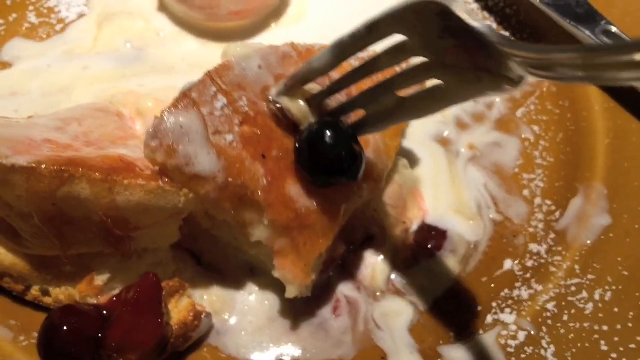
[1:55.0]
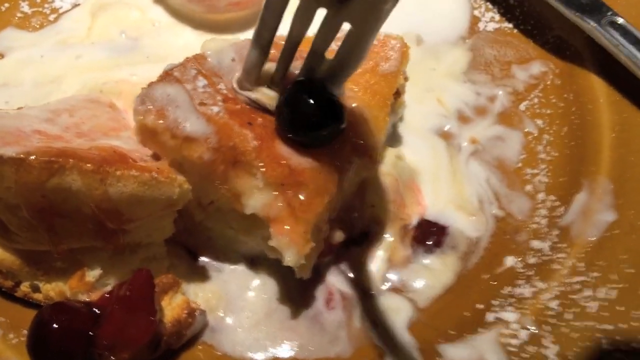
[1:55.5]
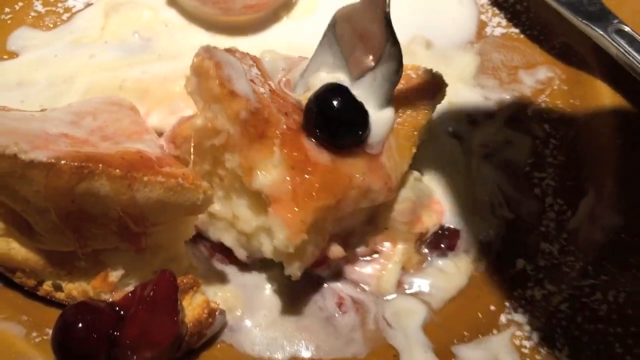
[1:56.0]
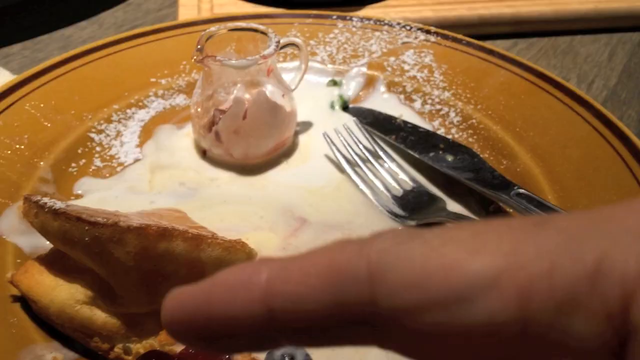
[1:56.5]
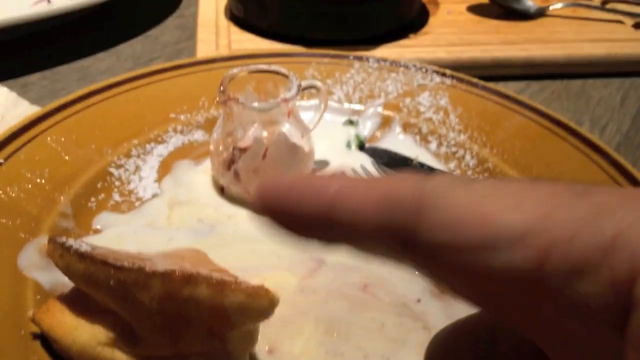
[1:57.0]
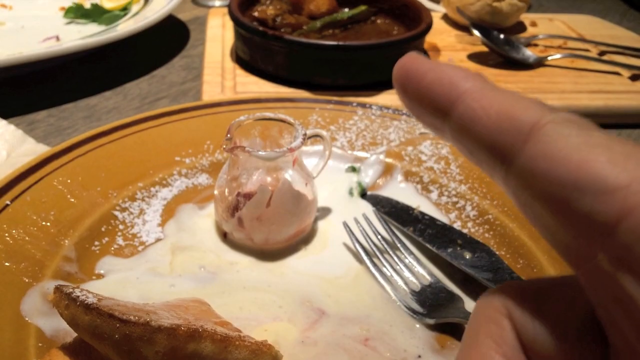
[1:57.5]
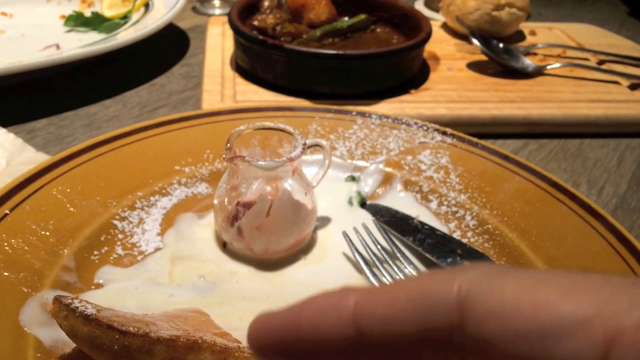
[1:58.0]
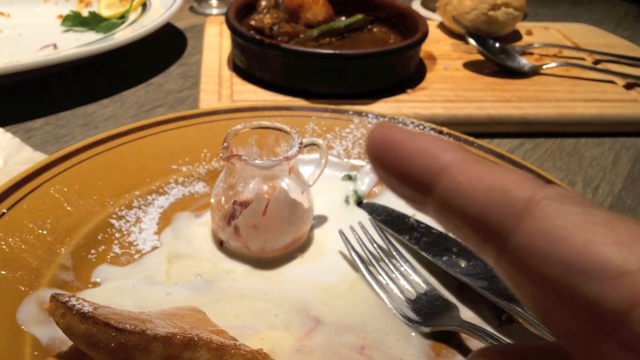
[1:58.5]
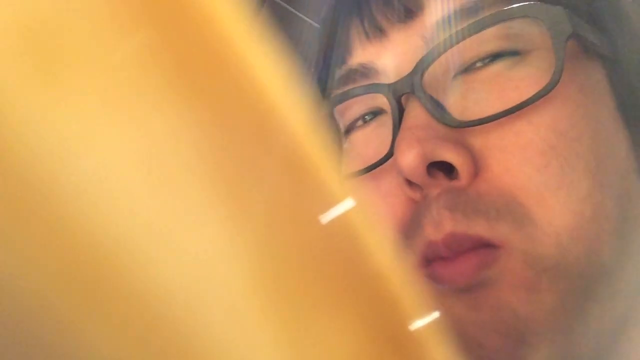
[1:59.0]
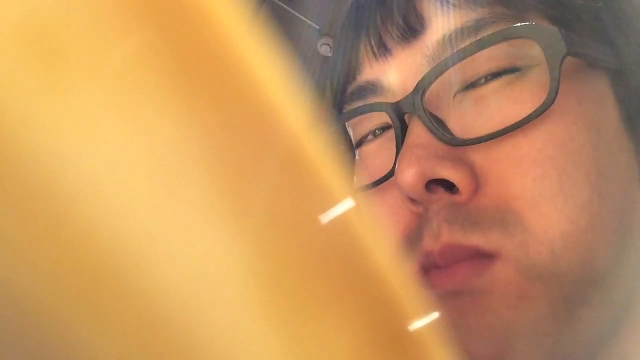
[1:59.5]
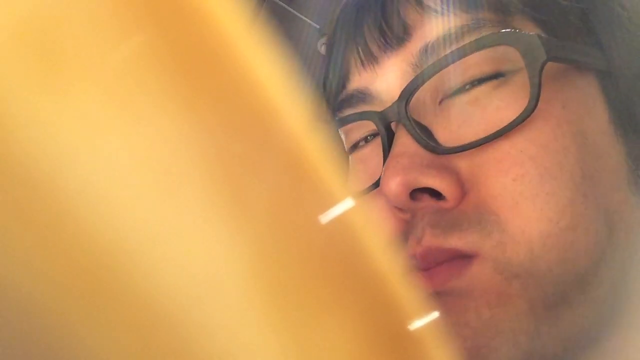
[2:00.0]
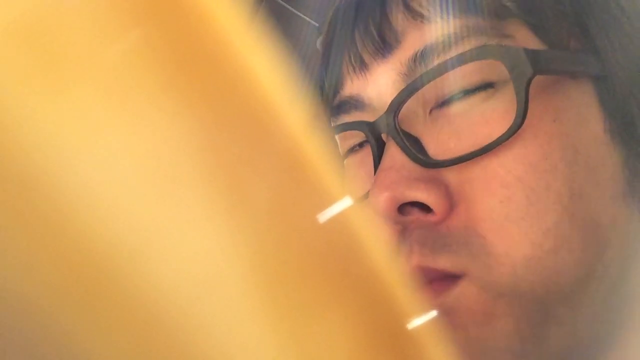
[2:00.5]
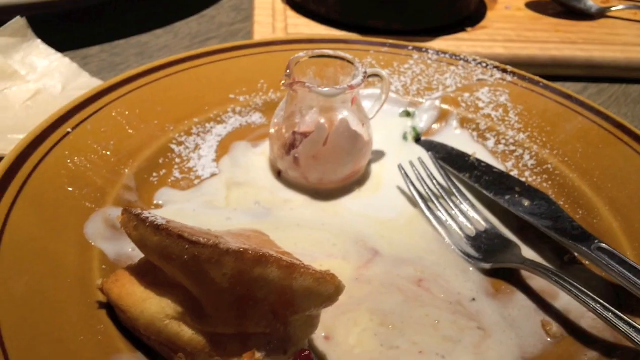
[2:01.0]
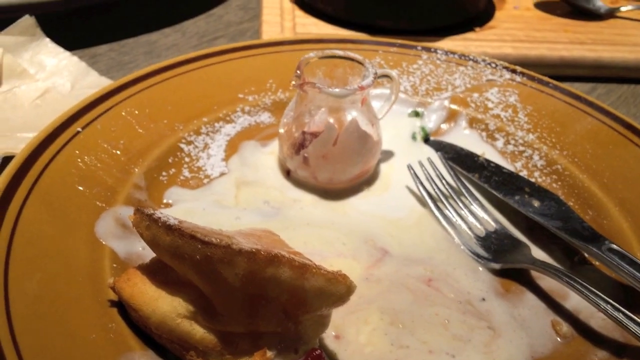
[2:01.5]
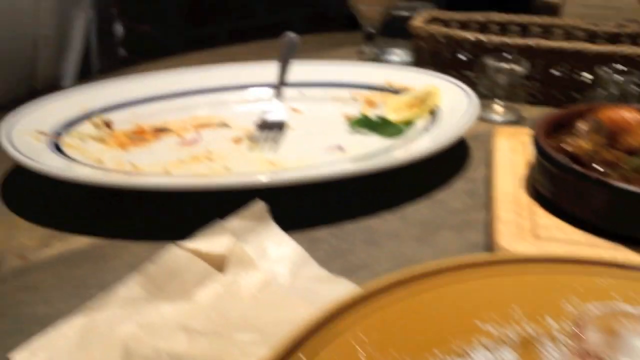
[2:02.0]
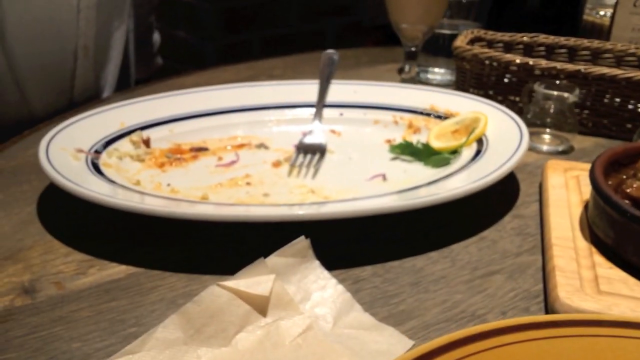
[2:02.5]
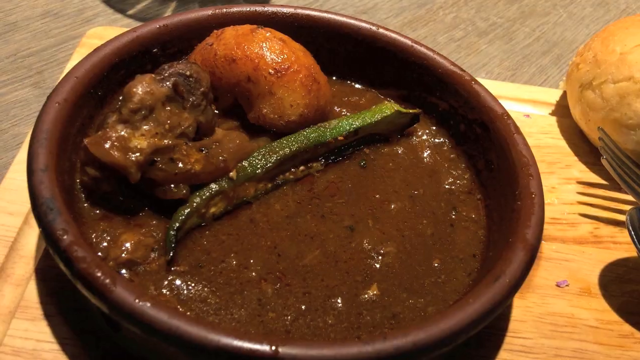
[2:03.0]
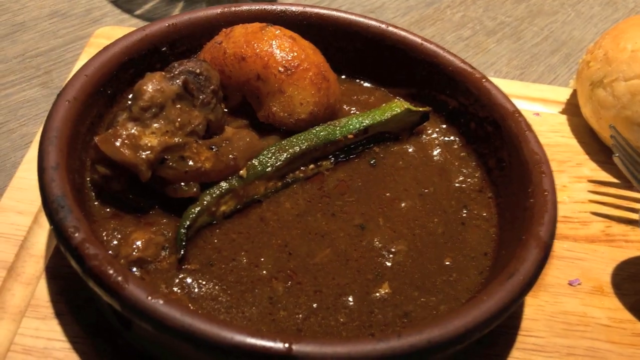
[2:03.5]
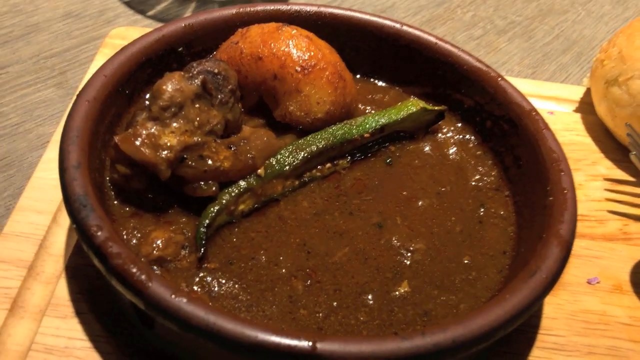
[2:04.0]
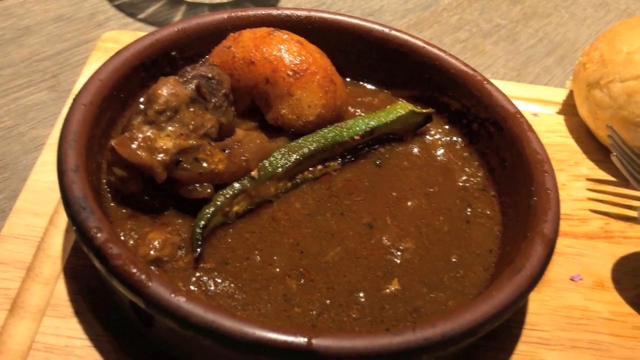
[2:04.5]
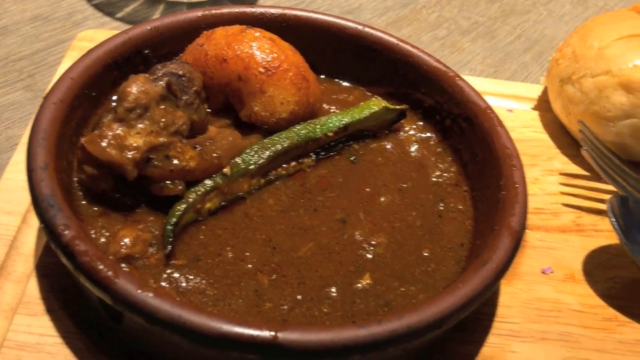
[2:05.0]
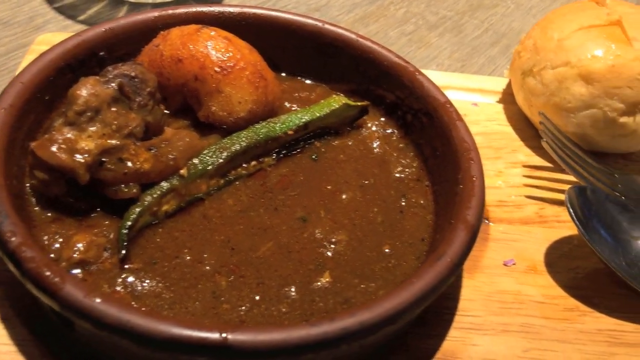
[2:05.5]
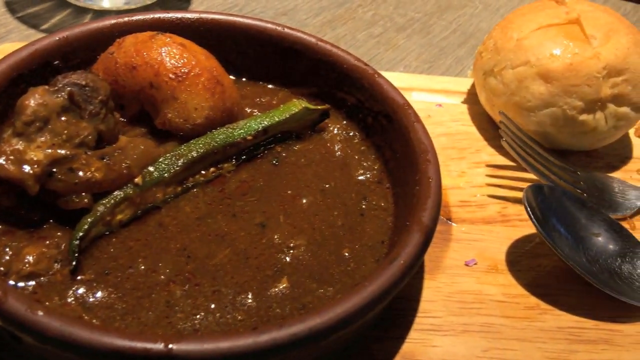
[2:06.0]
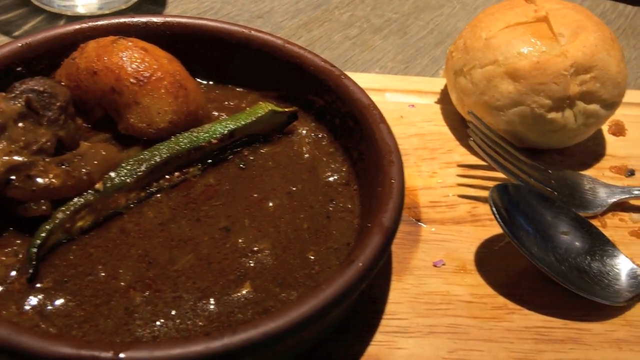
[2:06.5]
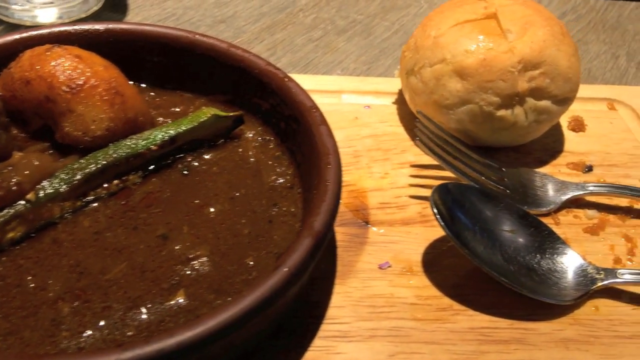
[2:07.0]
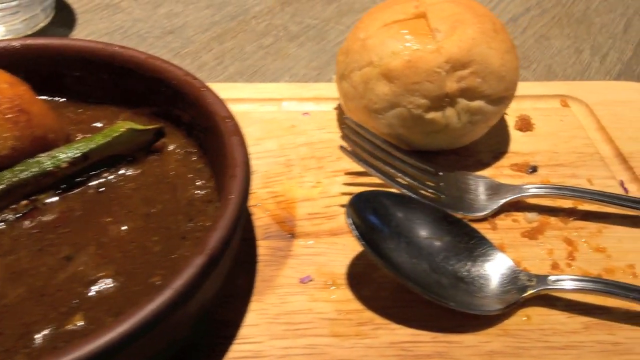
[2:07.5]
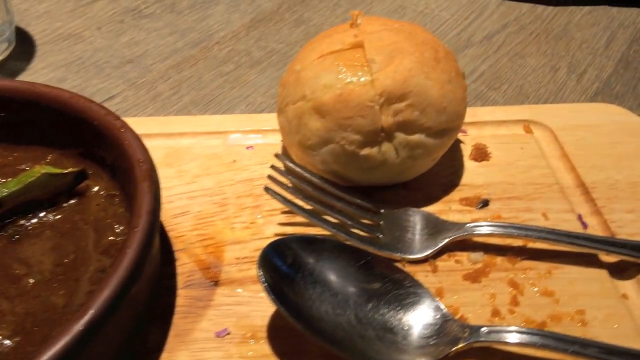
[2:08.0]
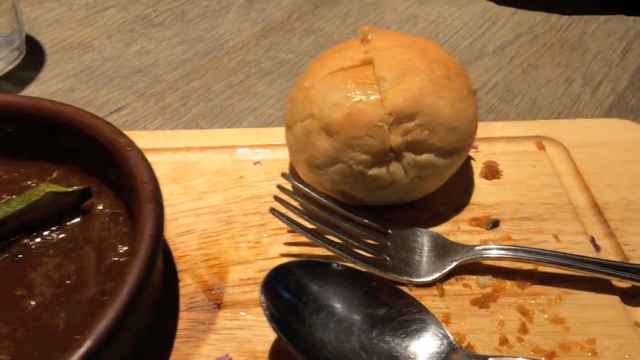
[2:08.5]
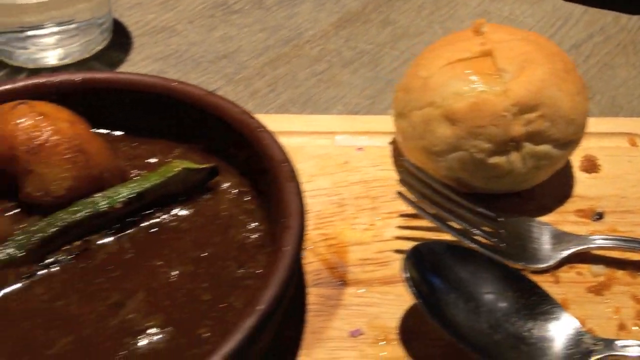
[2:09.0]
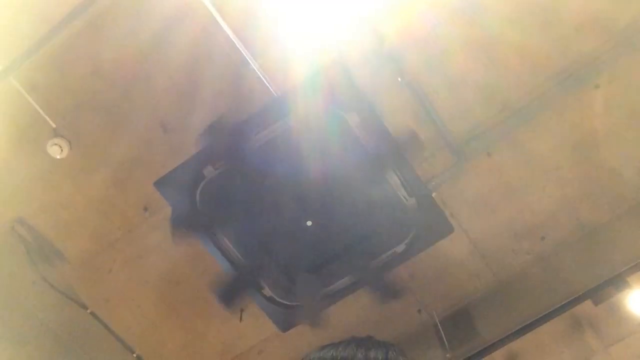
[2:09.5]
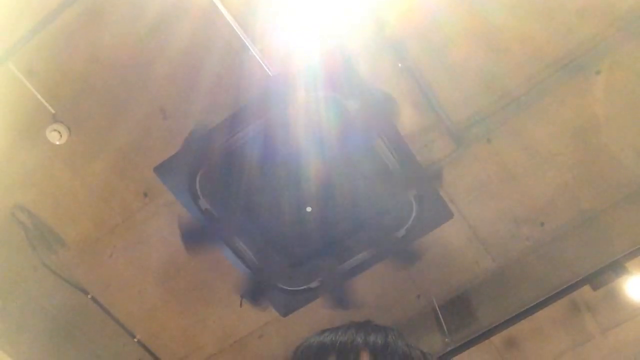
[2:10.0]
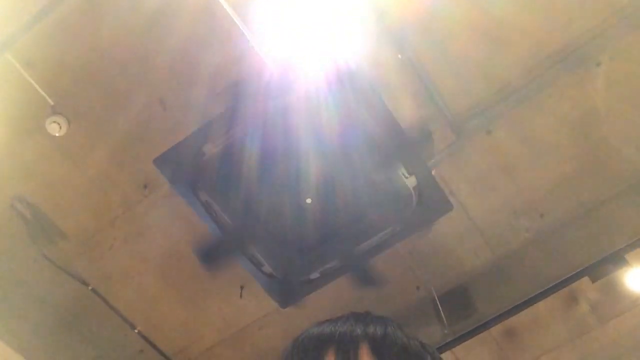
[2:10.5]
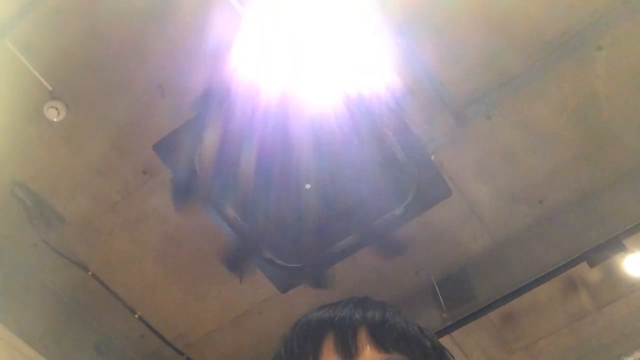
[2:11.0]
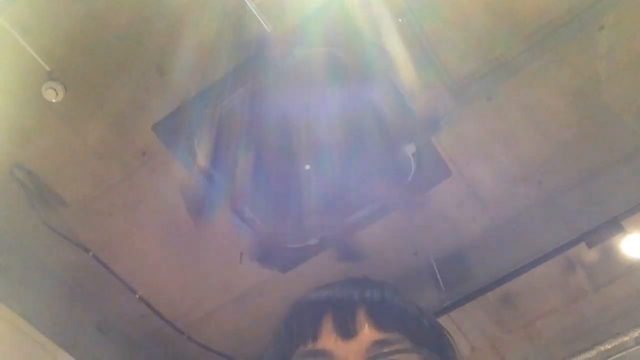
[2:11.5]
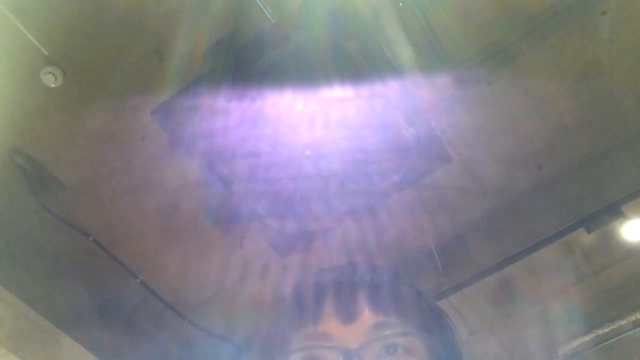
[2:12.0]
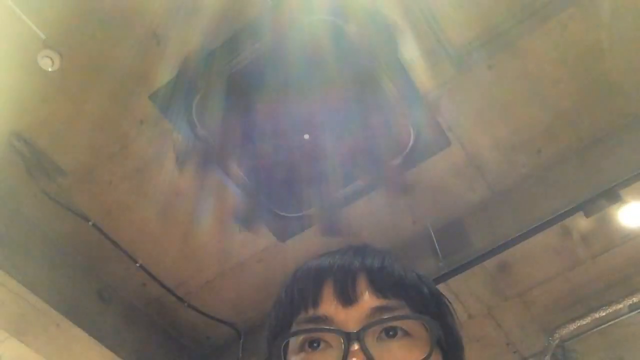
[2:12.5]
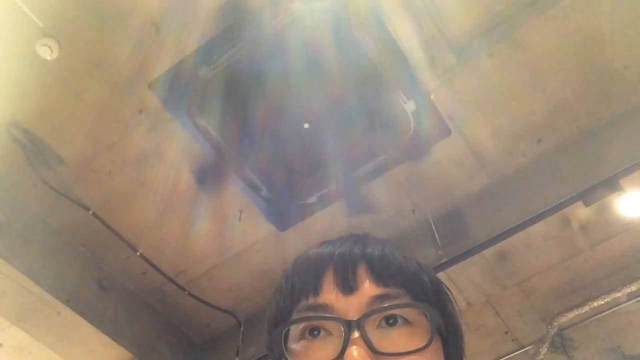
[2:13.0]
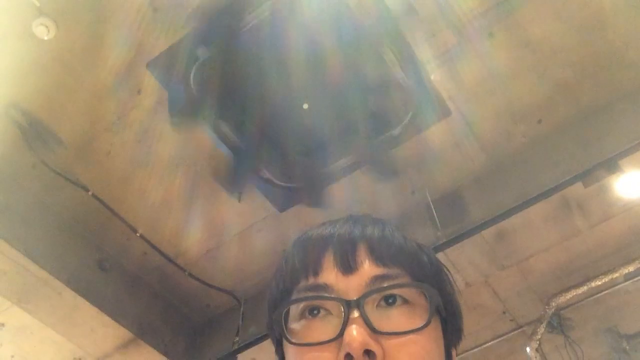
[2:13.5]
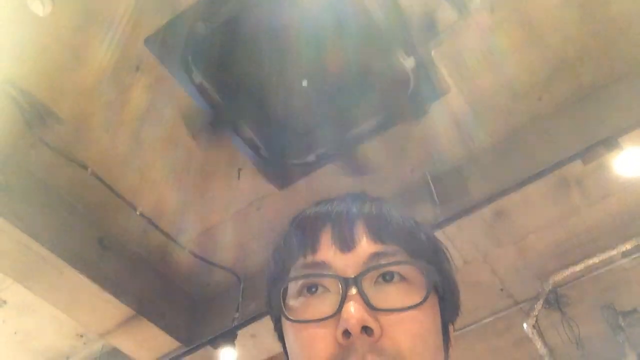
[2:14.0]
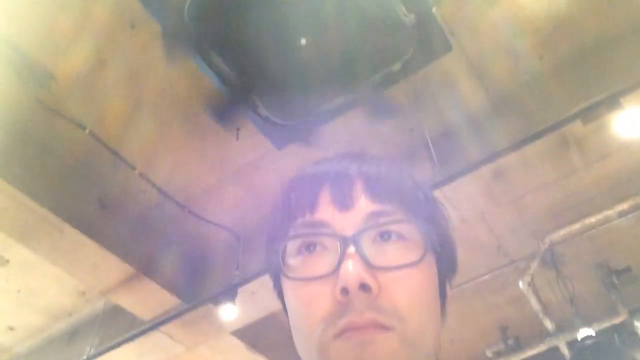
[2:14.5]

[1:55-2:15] The fork is still in the dessert, on the last bite on the plate, with a syrup cherry or strawberry on top, which he puts in his mouth. He shows the empty plate and points his finger at the dessert and the syrup jar, seemingly indicating a good combination. In selfie mode after the last bite, he seems very happy and has a bit of a smirk. The camera shows the empty dessert plate and the other plates on the table, which are not completely empty but almost. A total of three empty plates are seen. The camera then pans to a selfie of the man, who looks like he is in a food coma, panning up and down to show the fan on the ceiling.